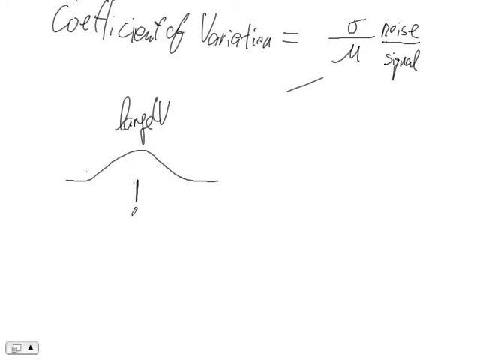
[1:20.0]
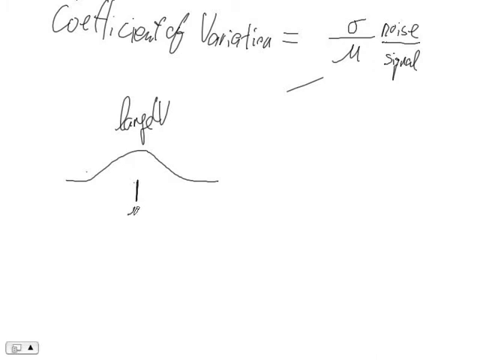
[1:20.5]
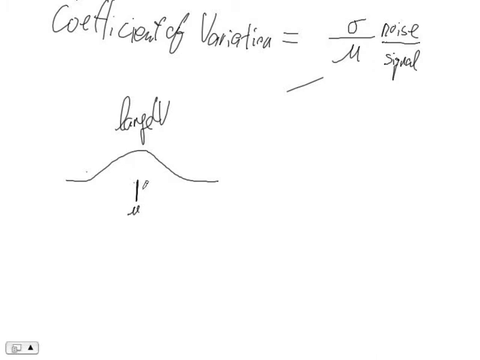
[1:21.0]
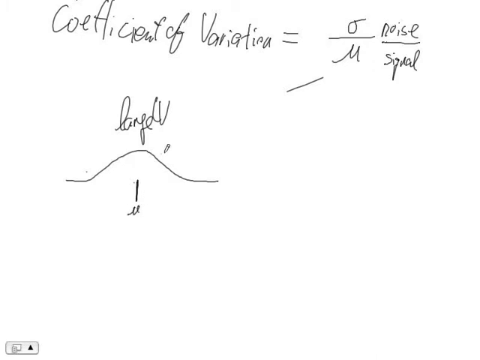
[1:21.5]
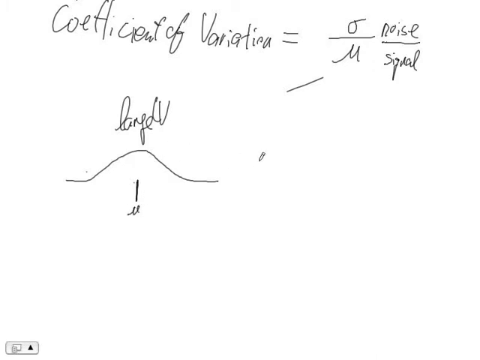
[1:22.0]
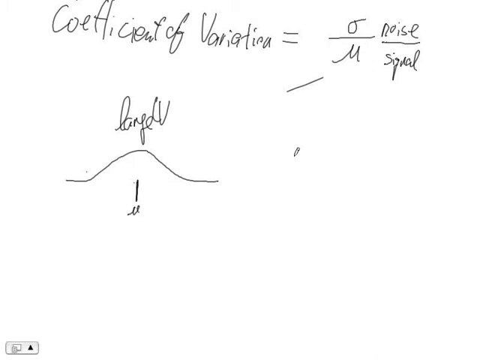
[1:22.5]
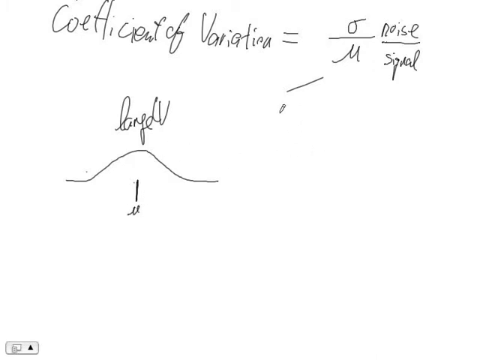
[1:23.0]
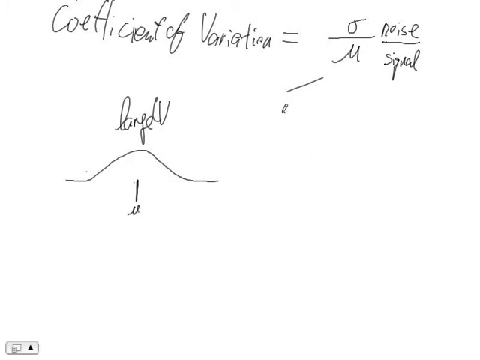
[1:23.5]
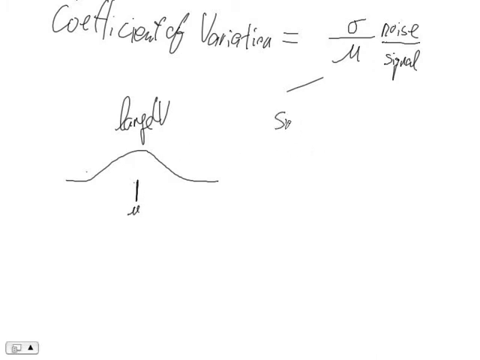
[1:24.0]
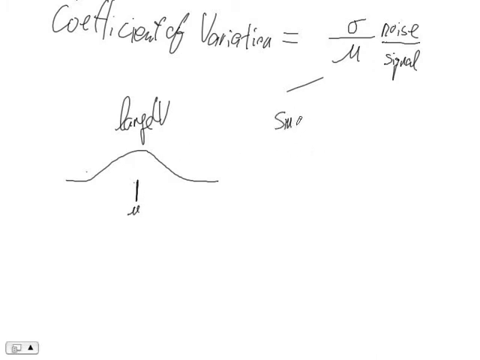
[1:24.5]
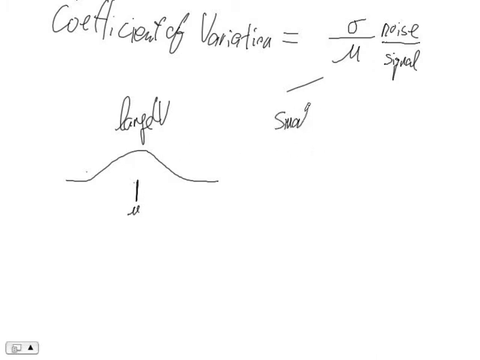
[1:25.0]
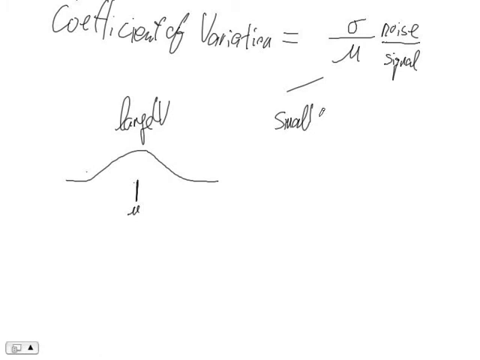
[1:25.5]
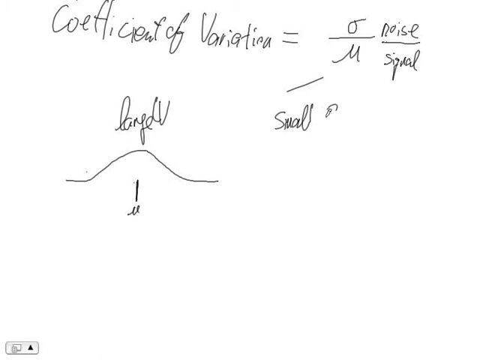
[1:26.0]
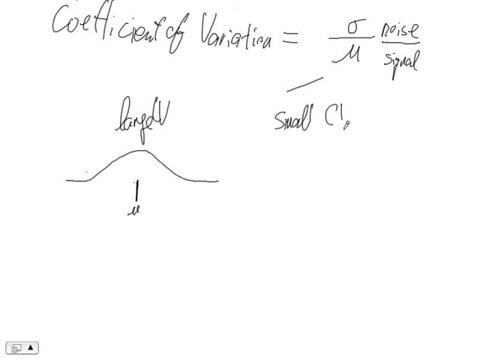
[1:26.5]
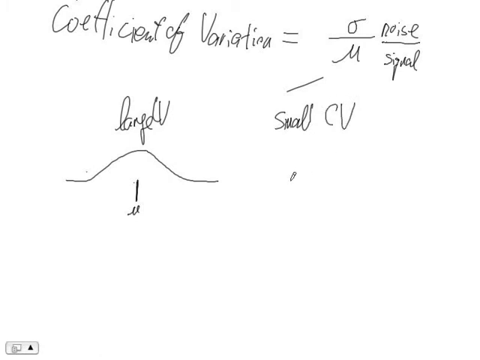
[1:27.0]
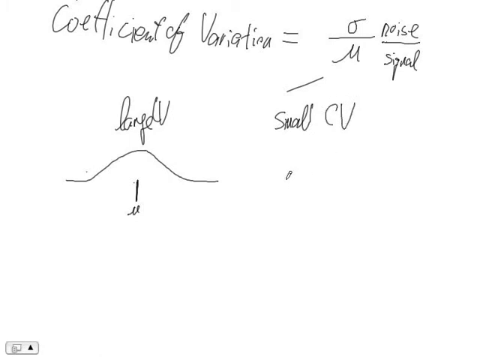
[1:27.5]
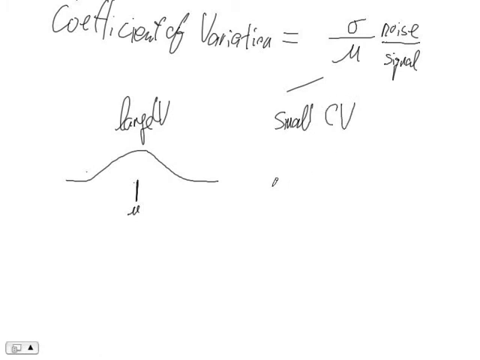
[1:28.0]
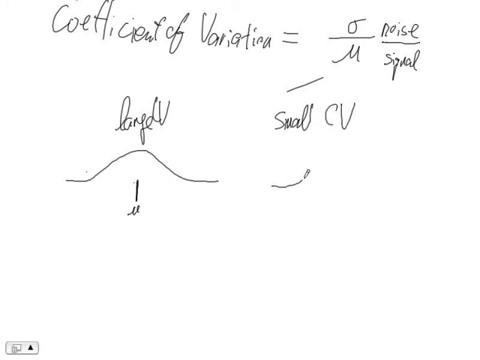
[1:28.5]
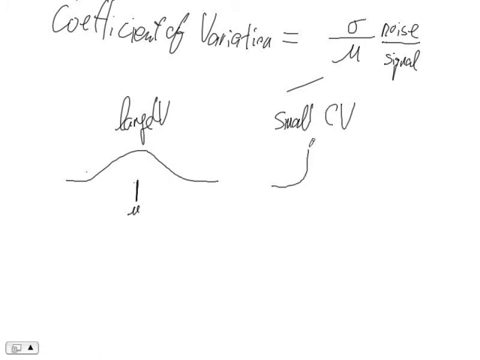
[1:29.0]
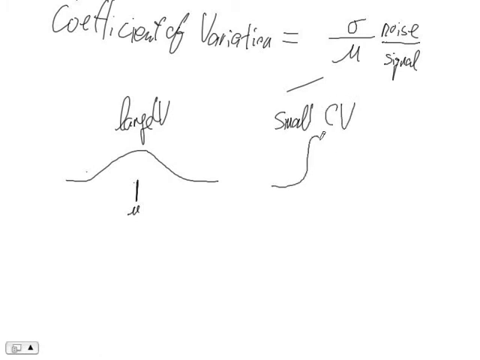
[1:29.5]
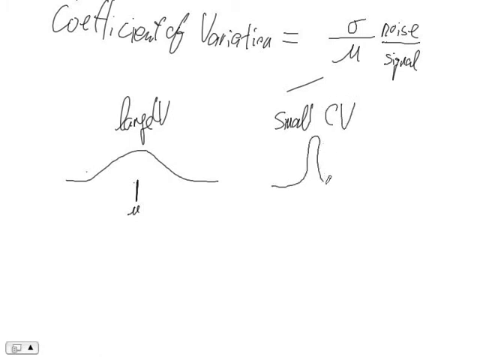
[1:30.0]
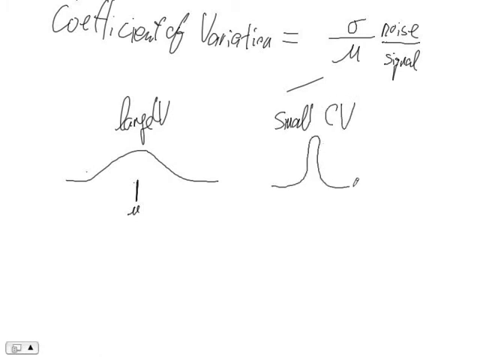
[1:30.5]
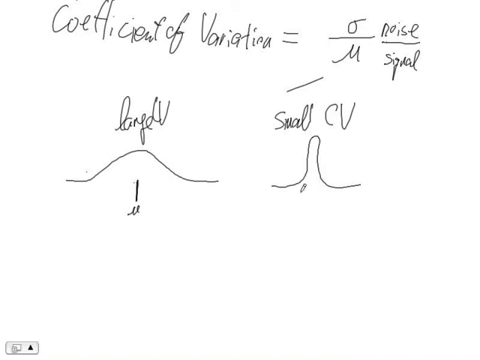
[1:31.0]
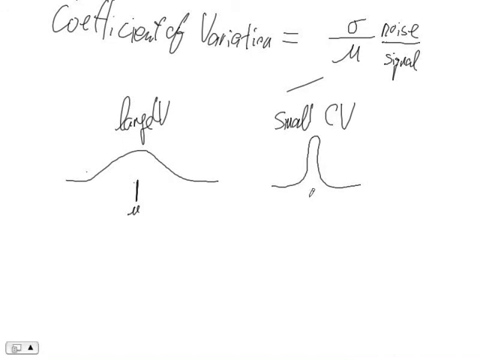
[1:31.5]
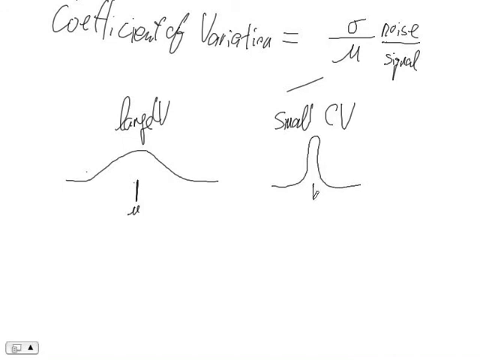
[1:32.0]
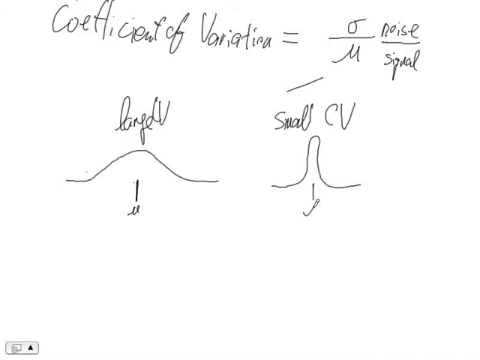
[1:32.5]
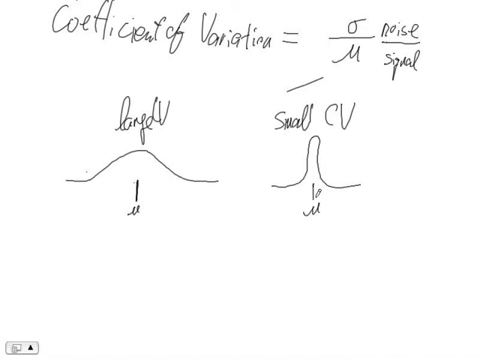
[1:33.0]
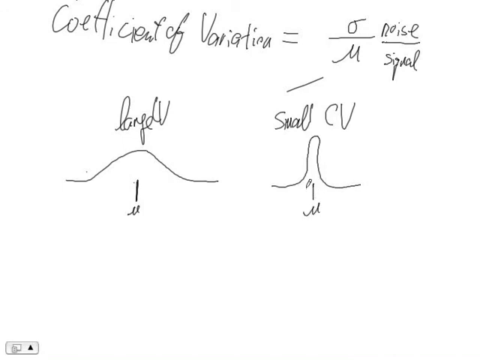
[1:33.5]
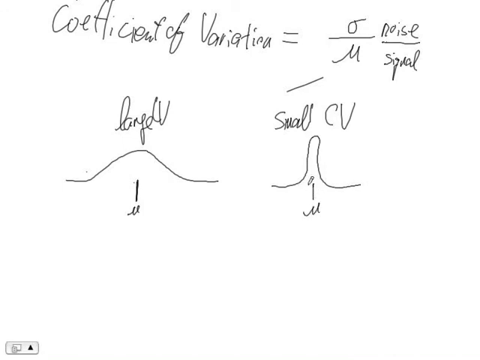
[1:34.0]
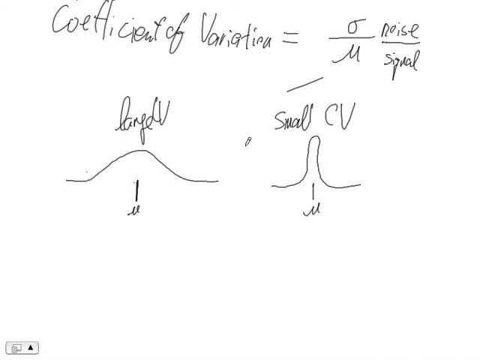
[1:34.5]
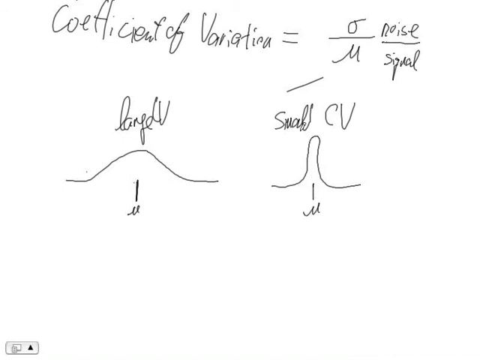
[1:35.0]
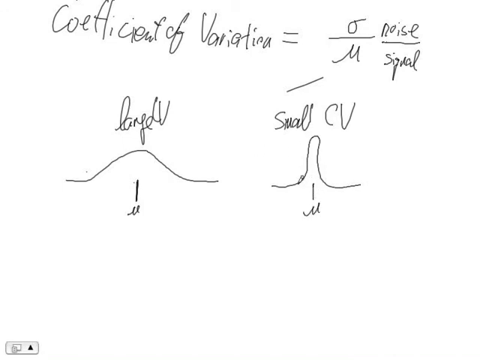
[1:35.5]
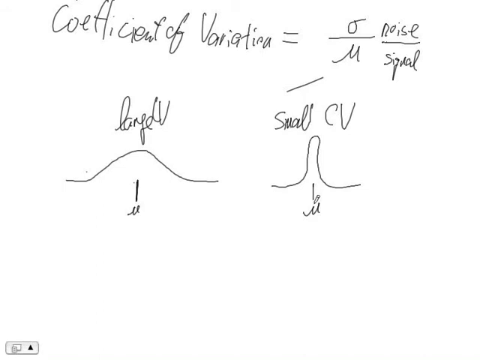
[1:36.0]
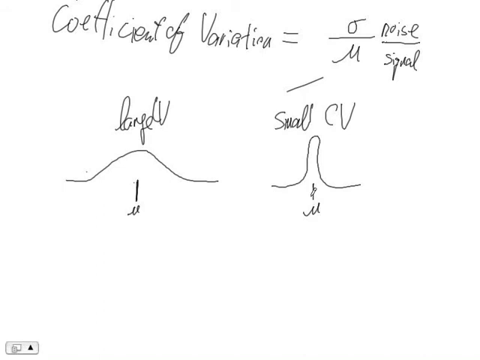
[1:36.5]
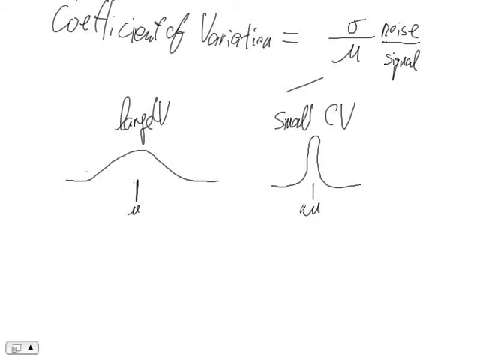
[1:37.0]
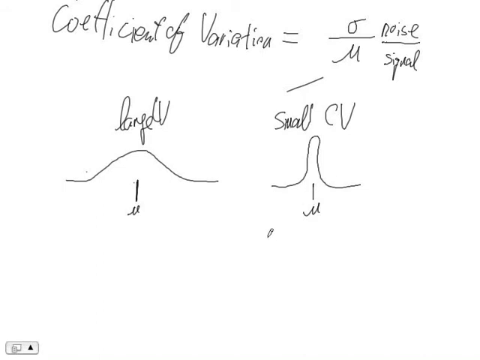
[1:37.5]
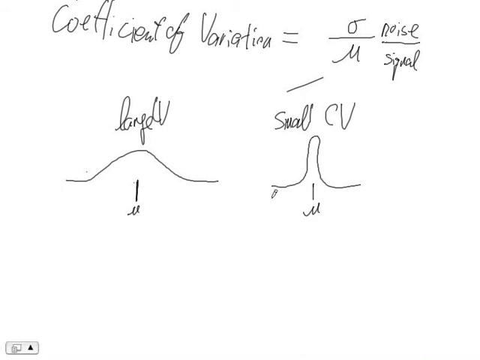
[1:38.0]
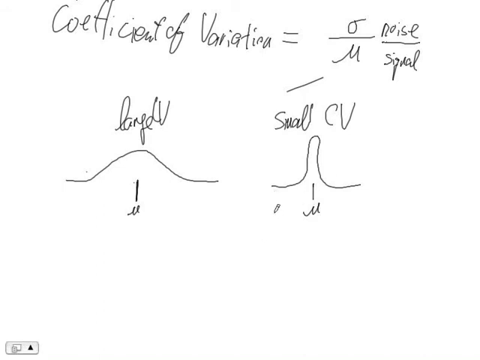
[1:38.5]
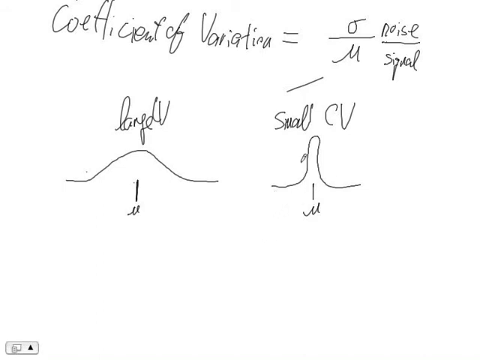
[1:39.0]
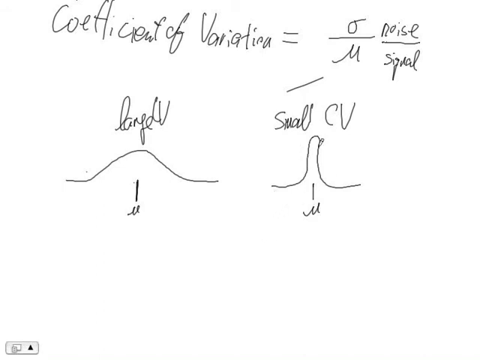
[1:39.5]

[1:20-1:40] The coefficient of variation is shown with a large V and a small CV. The large V shows a wider curve, while the small CV shows a long but slimmer curve with a U at the bottom. The large V's curve goes upwards and is enlarged and wide, while the small CV's curve goes down; it is smaller and slimmer in shape but goes well above the large V's curve. The tutorial explains this with diagrams.